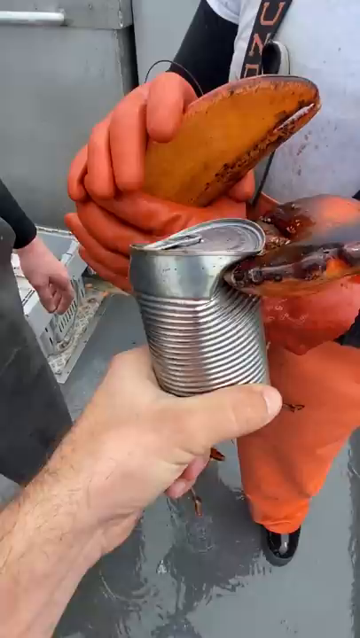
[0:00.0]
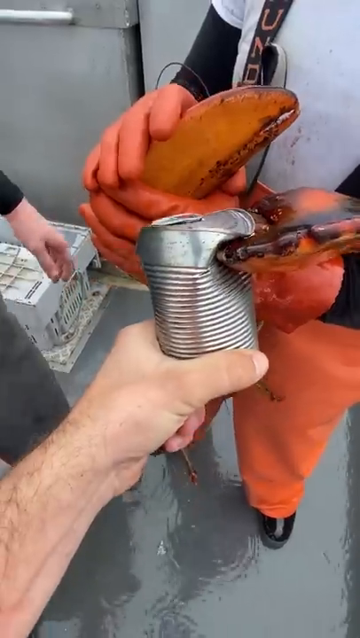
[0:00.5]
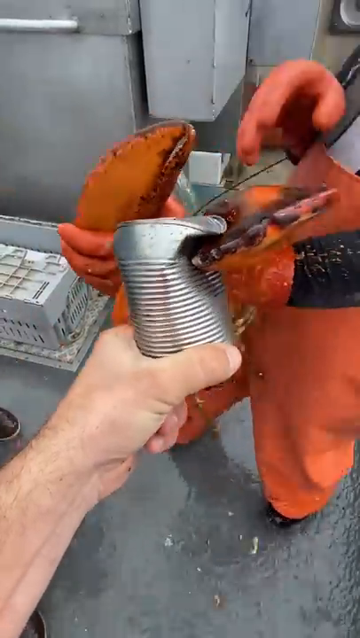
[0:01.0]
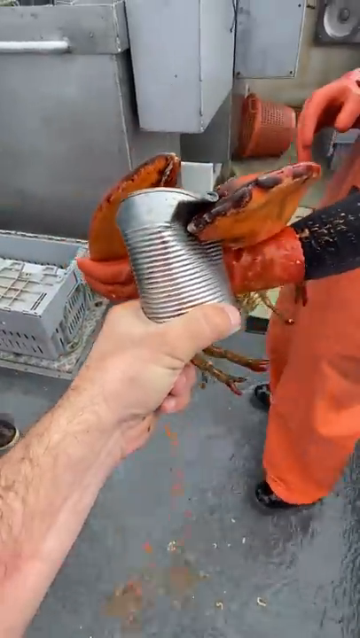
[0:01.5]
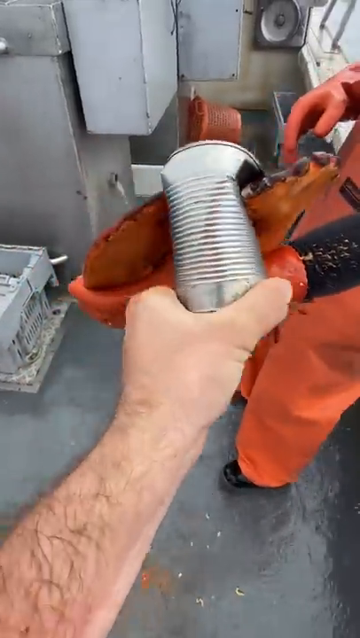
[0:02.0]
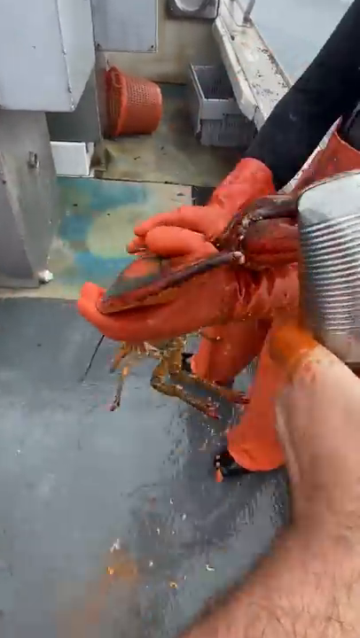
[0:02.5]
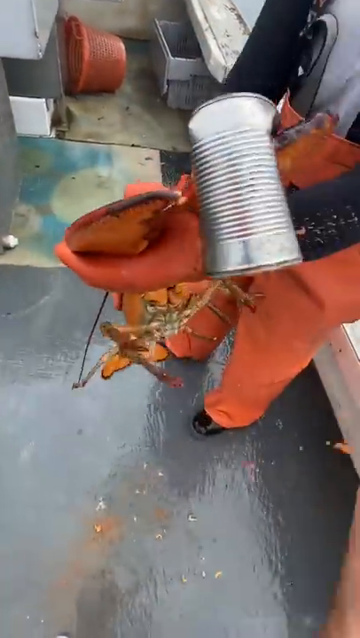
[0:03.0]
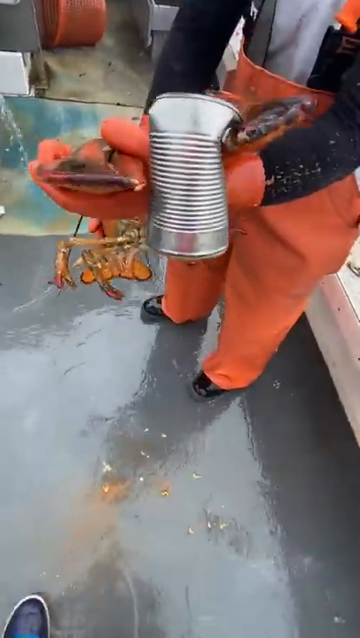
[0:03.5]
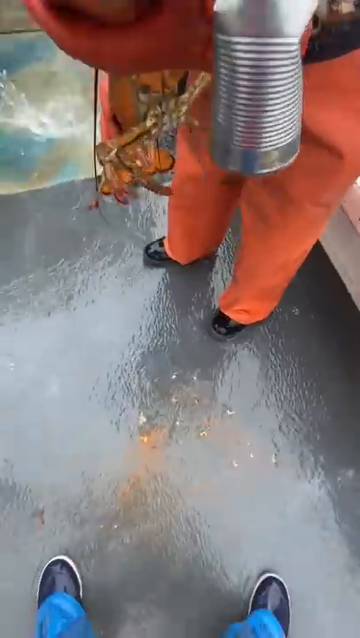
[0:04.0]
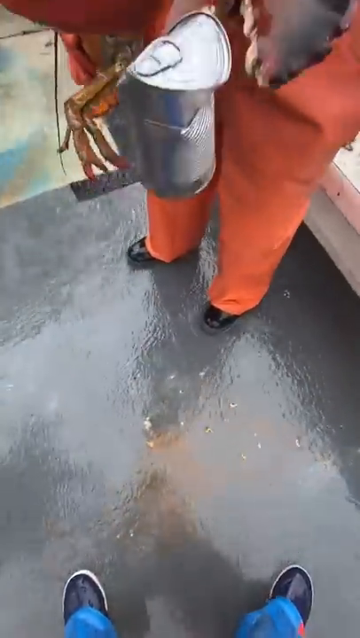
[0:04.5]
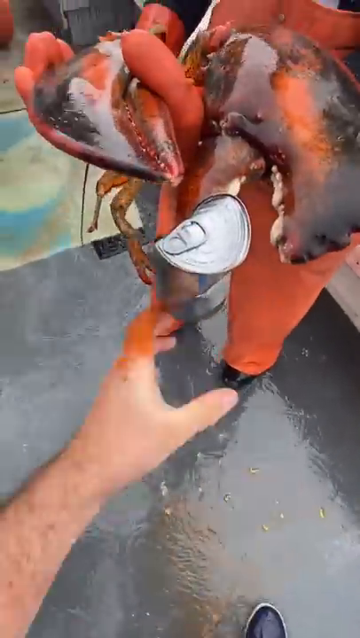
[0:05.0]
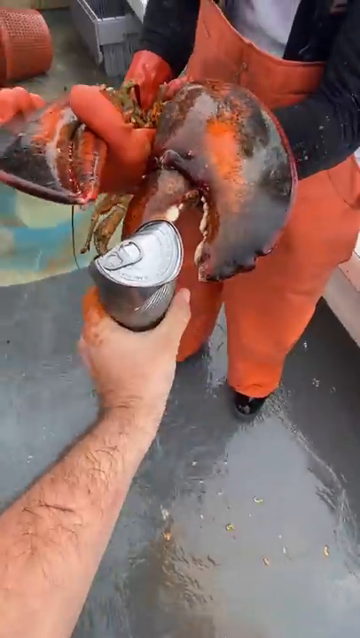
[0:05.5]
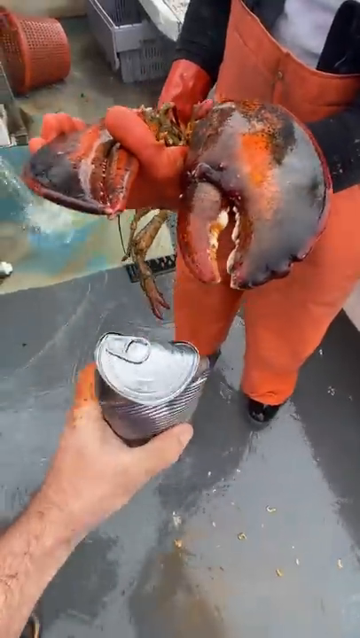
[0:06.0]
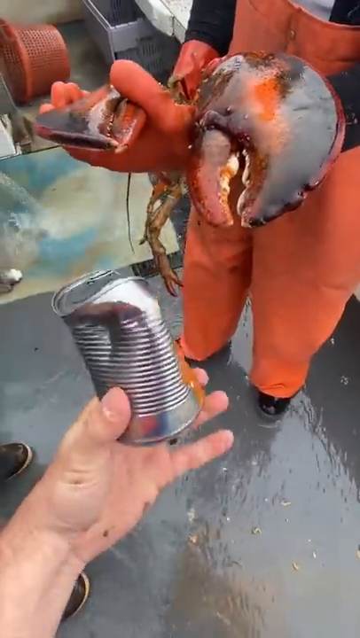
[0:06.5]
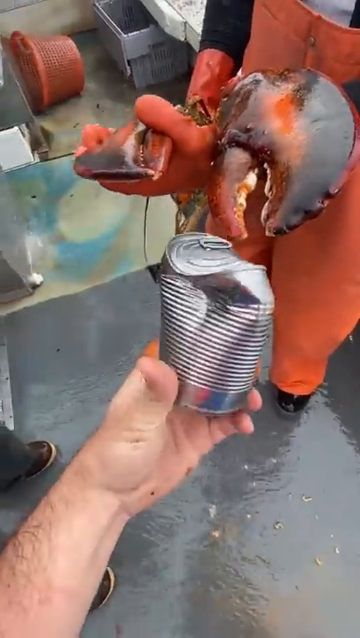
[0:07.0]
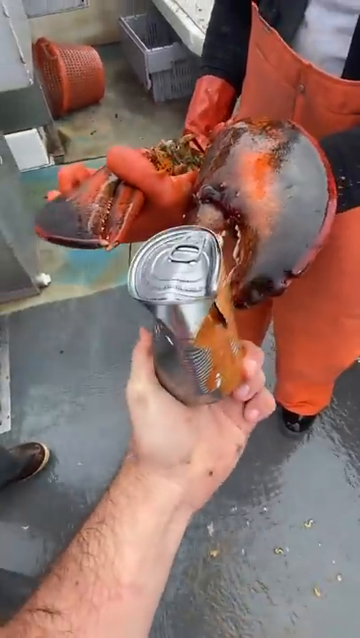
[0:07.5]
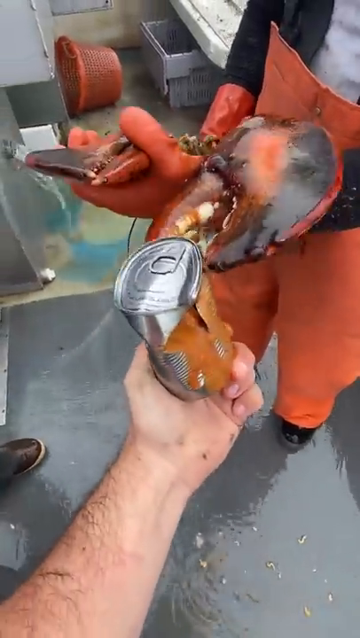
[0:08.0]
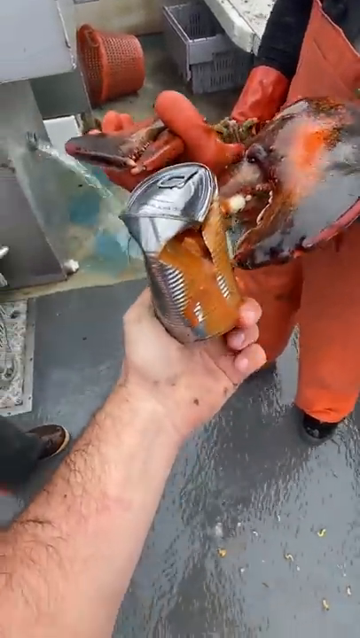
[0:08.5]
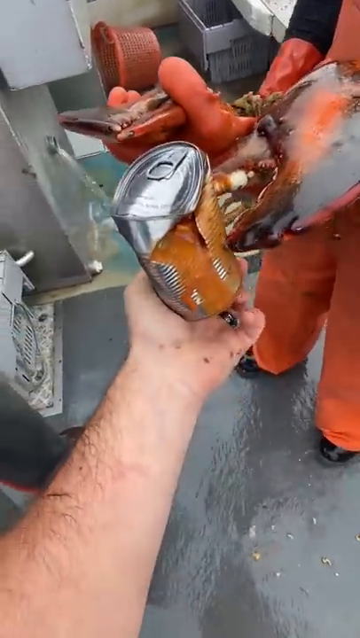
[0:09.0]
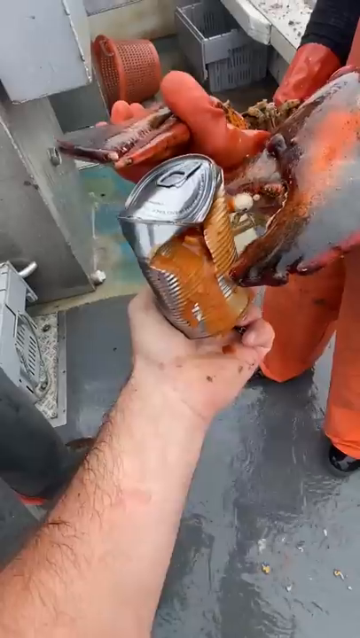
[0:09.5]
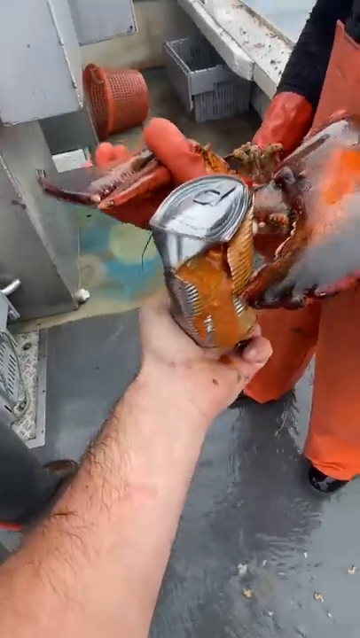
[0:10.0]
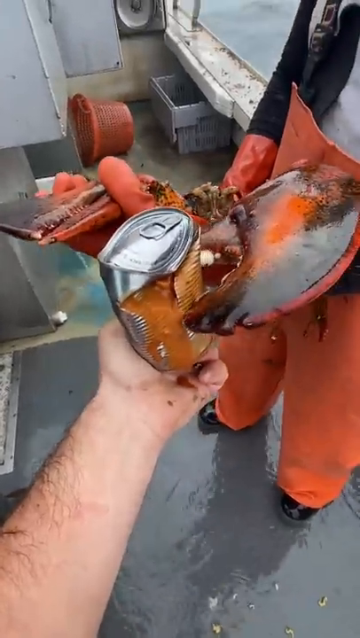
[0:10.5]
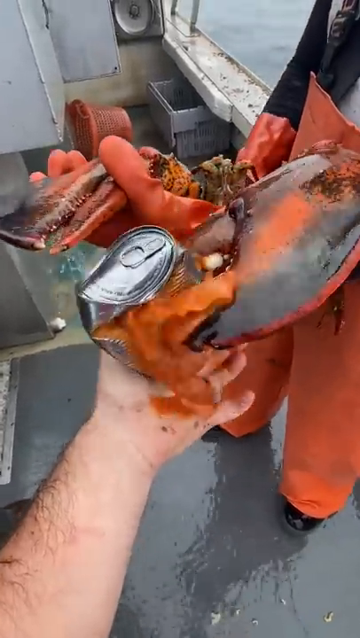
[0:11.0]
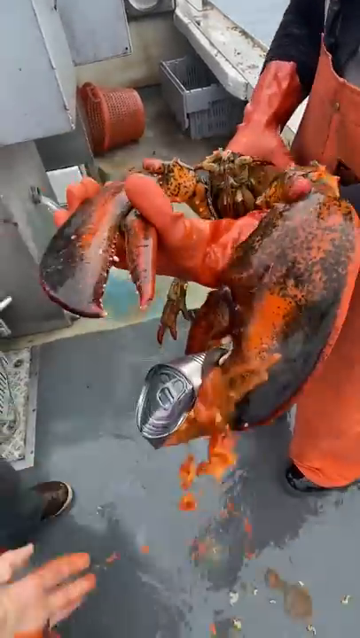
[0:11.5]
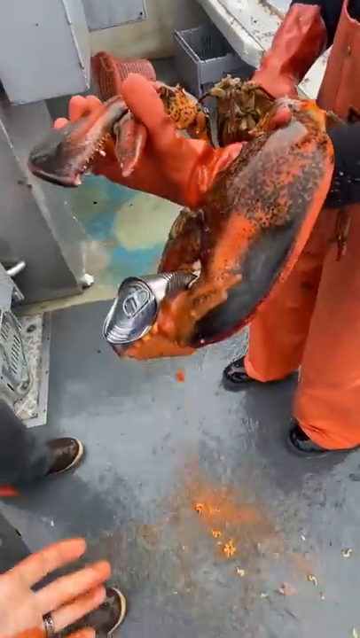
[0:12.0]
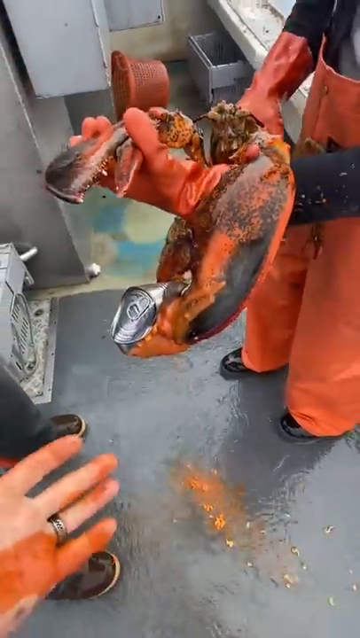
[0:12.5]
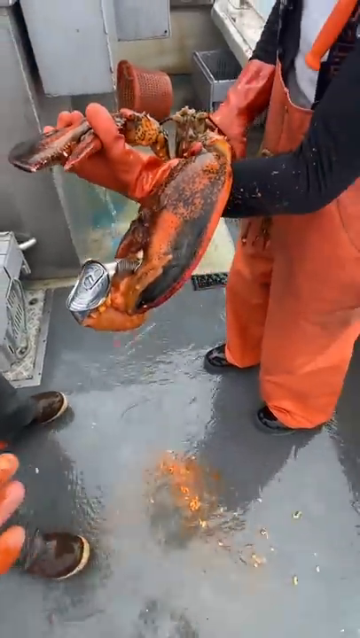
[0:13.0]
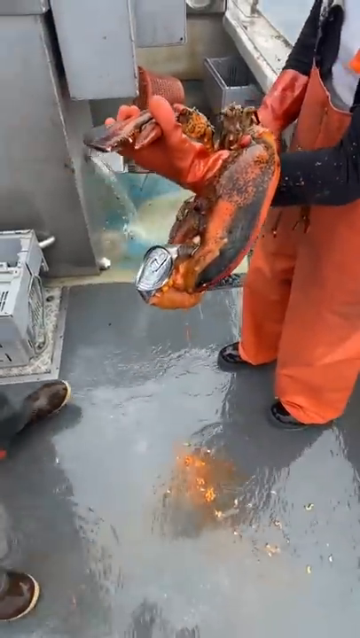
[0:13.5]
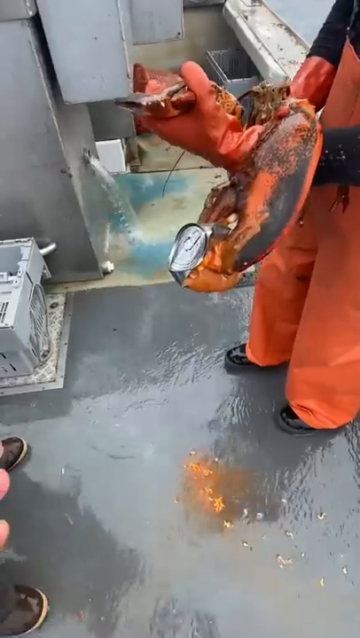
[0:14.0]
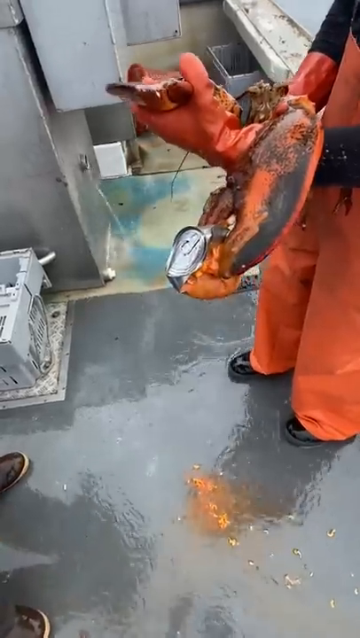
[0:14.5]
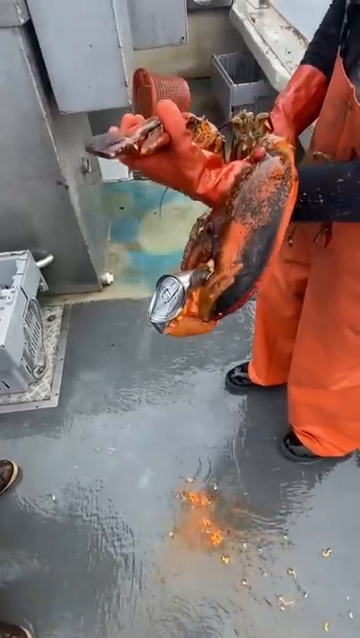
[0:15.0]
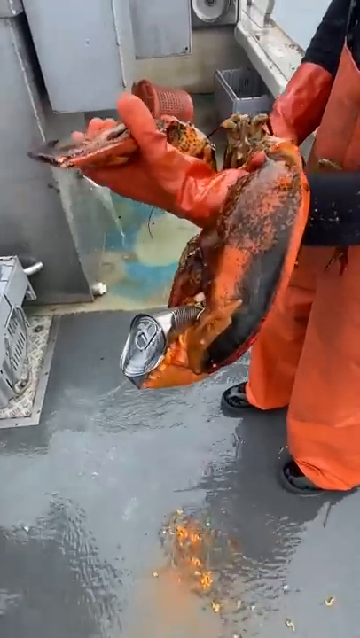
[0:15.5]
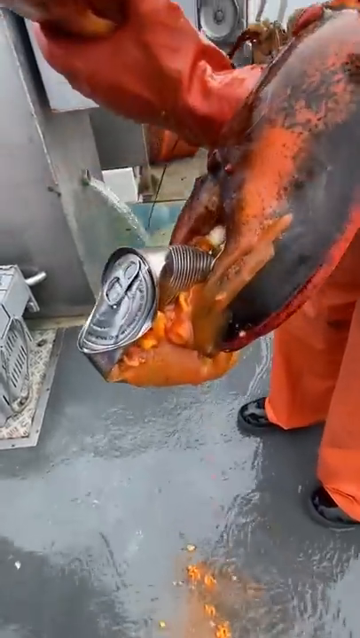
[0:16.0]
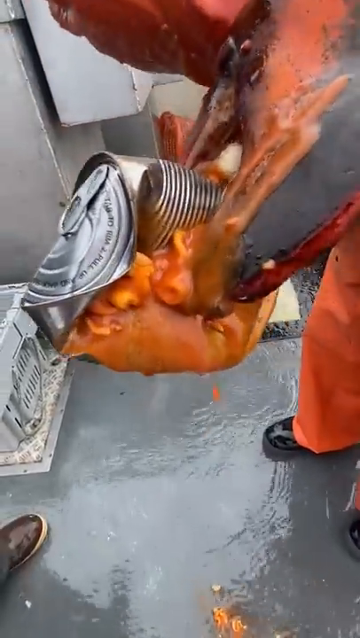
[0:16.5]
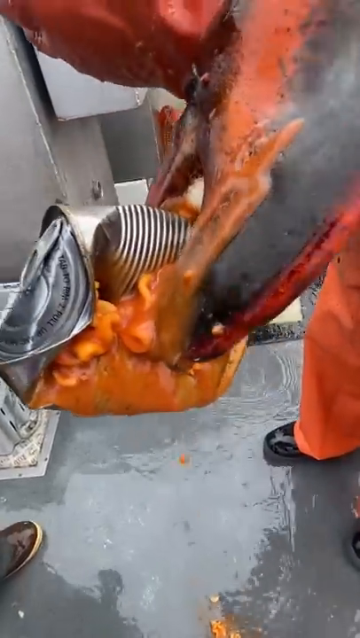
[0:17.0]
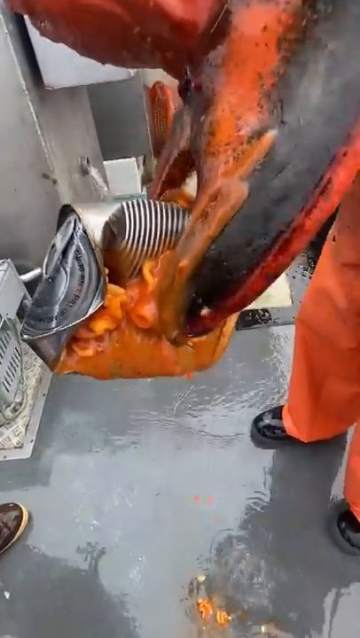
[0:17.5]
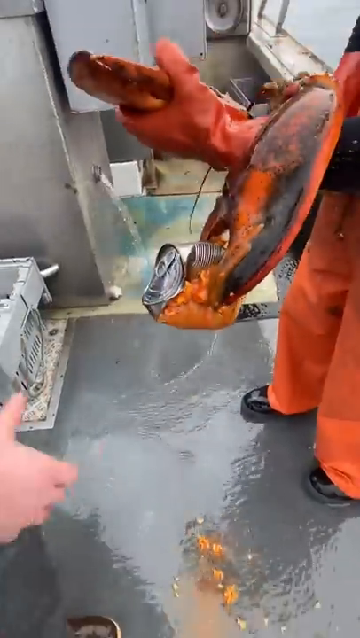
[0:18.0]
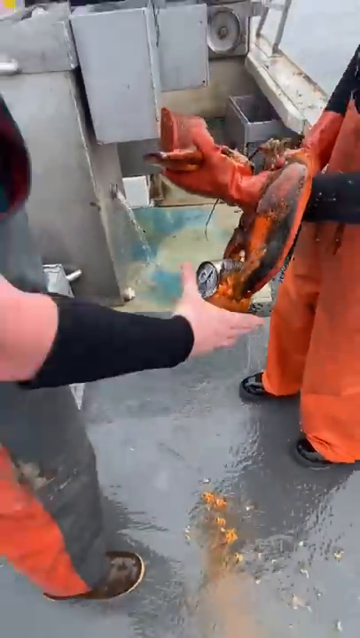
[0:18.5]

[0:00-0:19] Some fishermen are present, and one fisherman has a huge lobster with huge claws. Another person has a full tin can and puts it into one claw of the lobster. The lobster squeezes the can and crushes it so hard that the contents of the can spill out onto the floor. The person holding the lobster has one set of claws closed: he holds the smaller claw shut, while the other, larger claw is free.